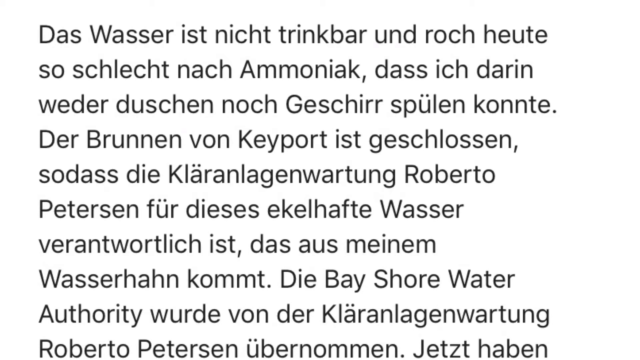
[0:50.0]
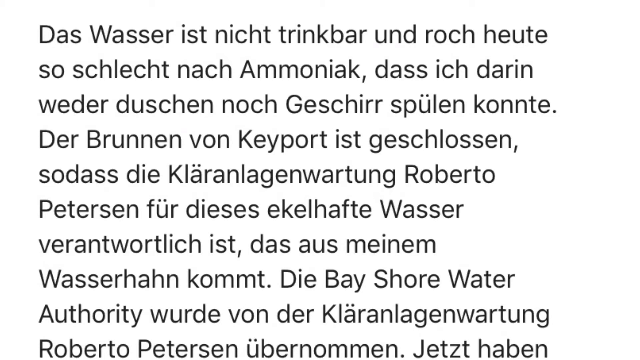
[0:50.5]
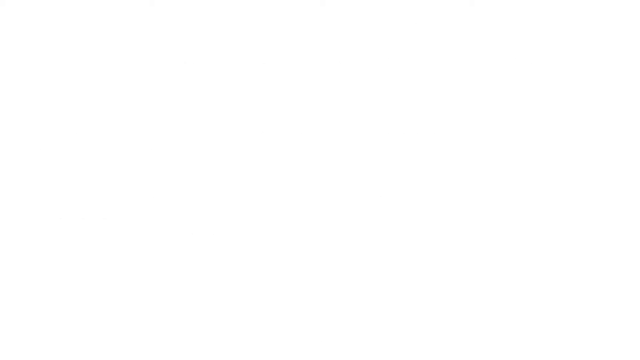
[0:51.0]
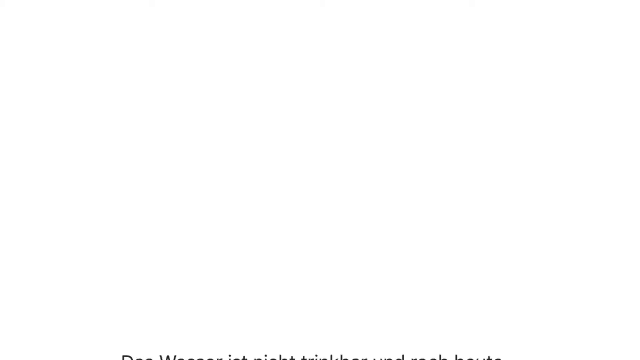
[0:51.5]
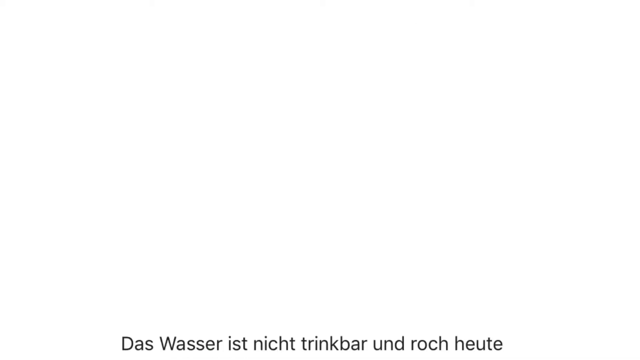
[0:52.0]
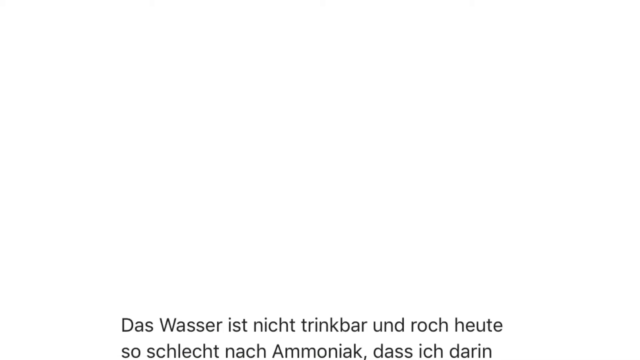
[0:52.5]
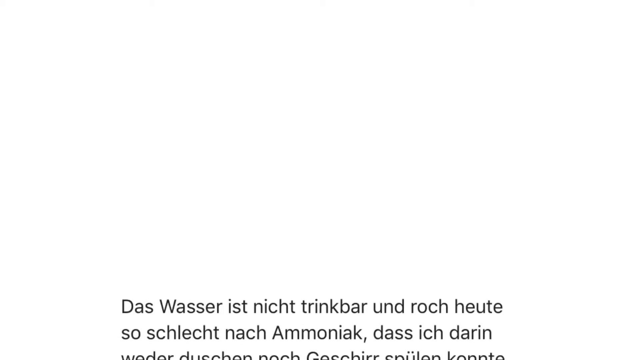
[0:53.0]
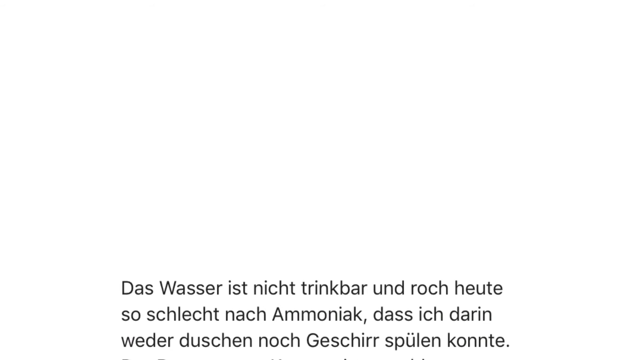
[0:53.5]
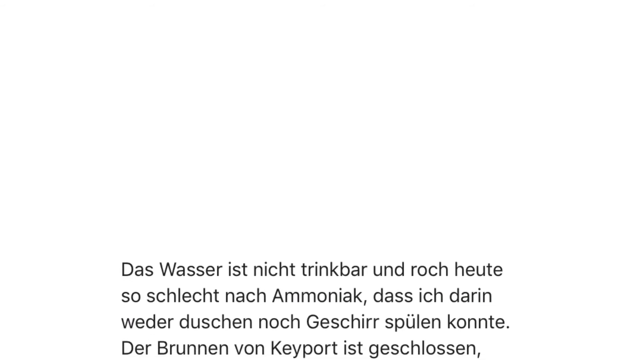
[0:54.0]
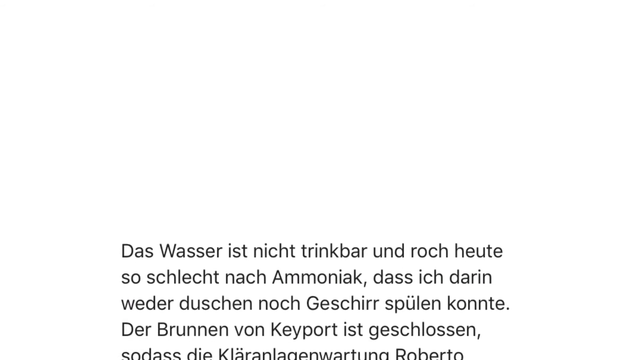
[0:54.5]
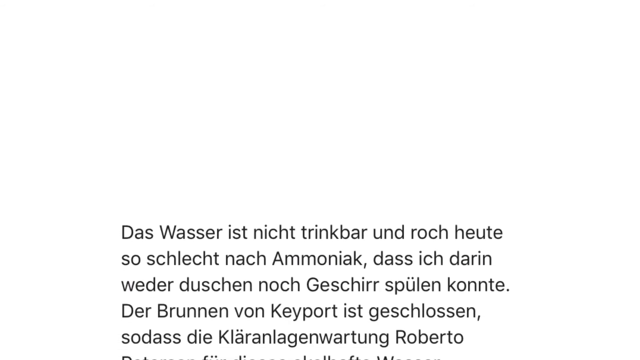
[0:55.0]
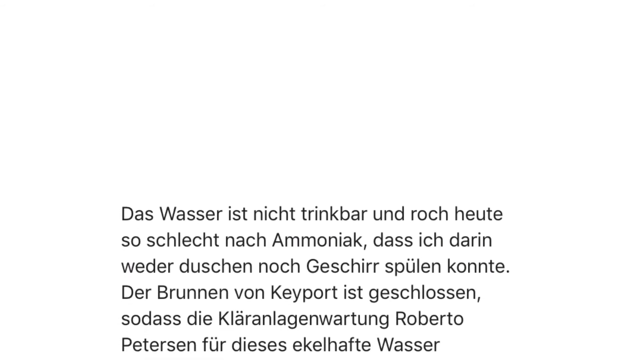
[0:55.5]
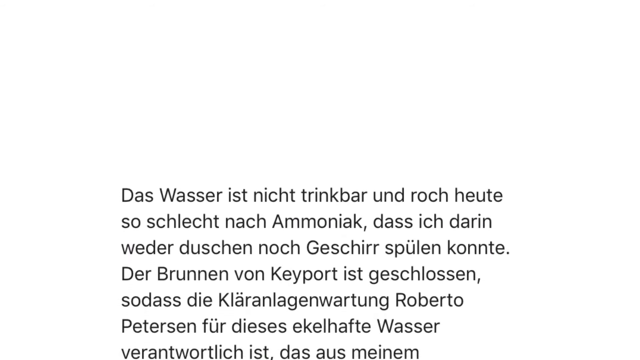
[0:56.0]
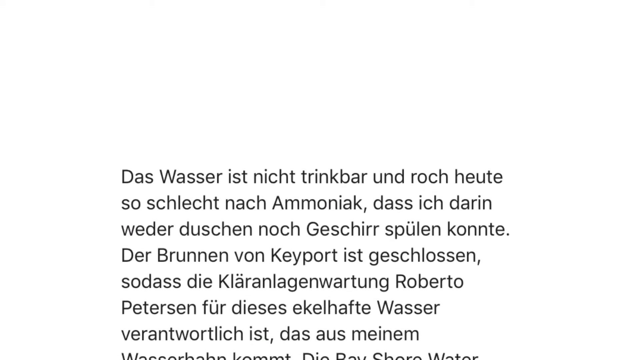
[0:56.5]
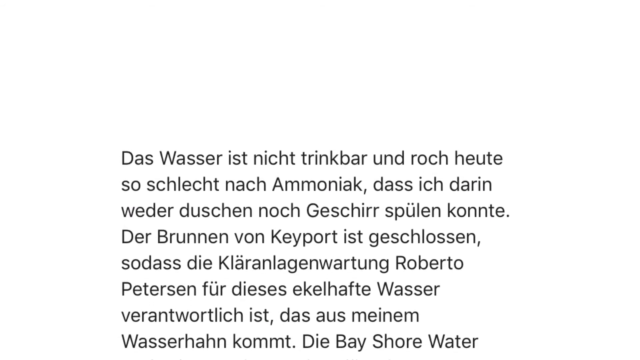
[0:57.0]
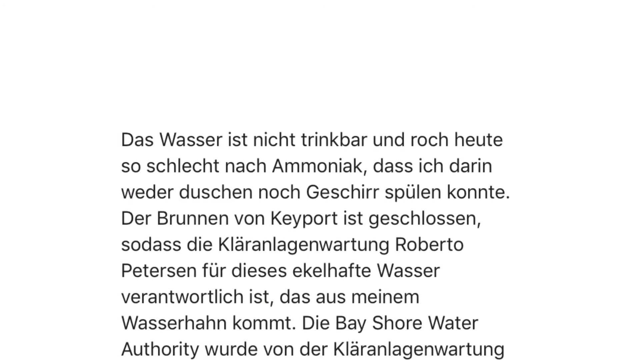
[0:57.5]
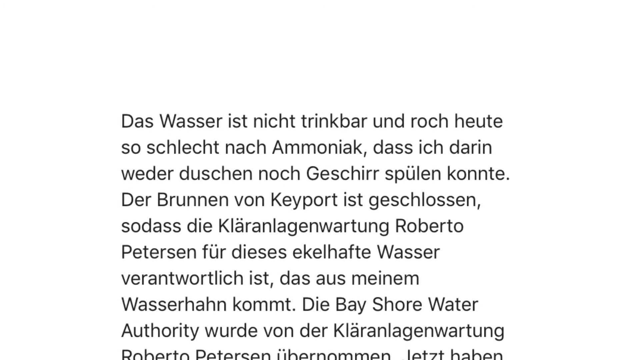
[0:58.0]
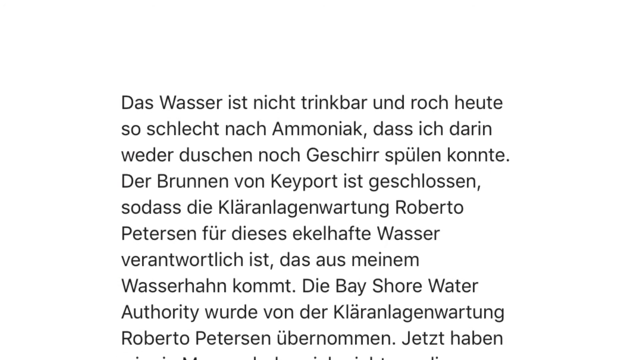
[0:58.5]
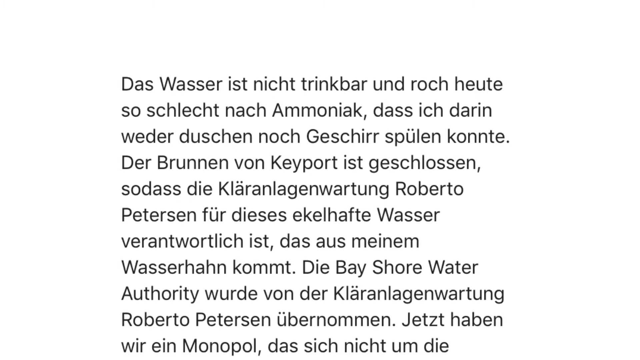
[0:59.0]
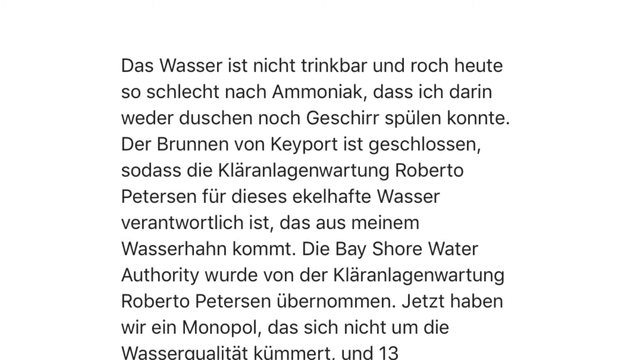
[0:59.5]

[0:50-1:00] Text messages written in German zoom and fade up, in black text on a white background. Each fades off and transitions to further messages in German with no subtitles. The name Roberto Peterson and Bayshore Water are mentioned. Everything is on a white background, and one screen shows just a paragraph of text.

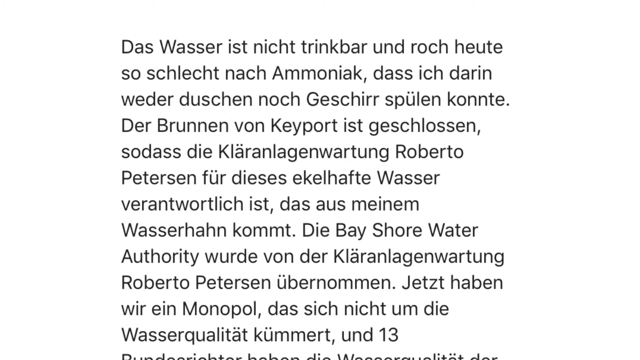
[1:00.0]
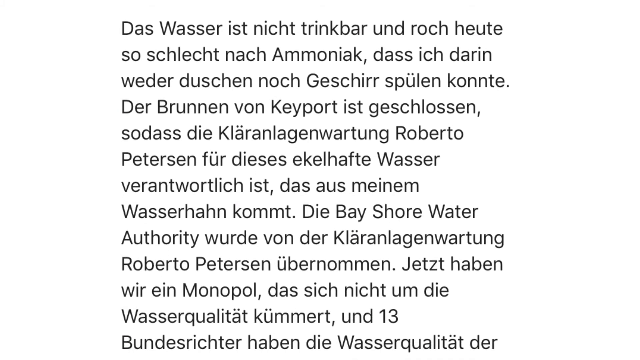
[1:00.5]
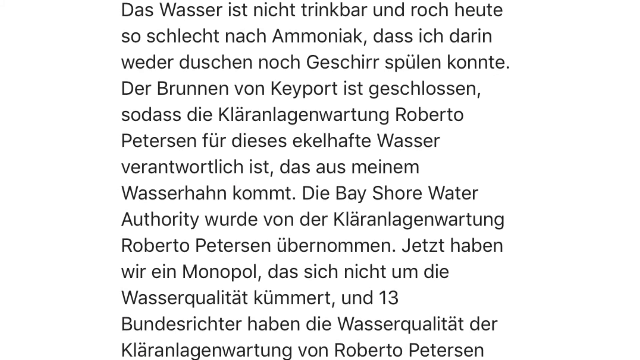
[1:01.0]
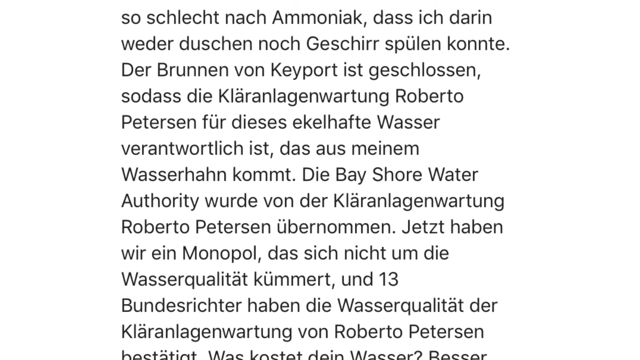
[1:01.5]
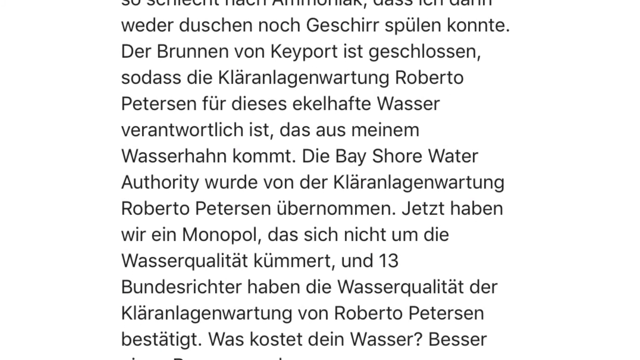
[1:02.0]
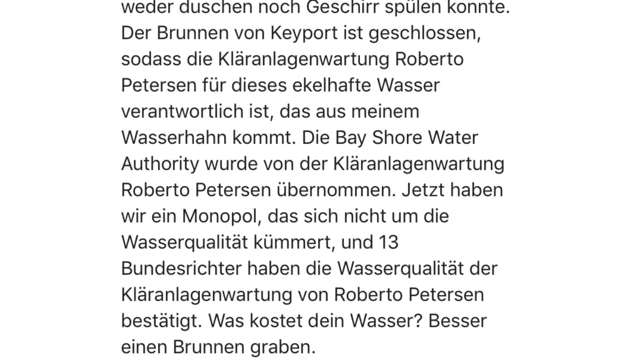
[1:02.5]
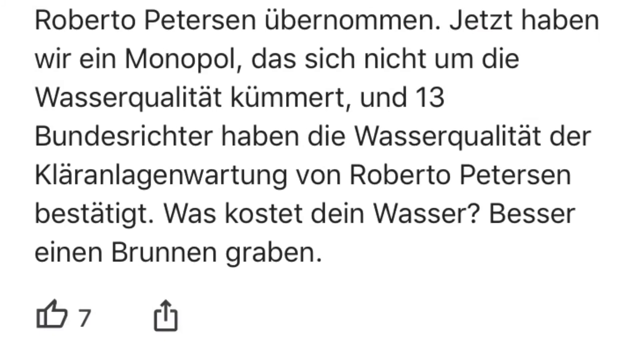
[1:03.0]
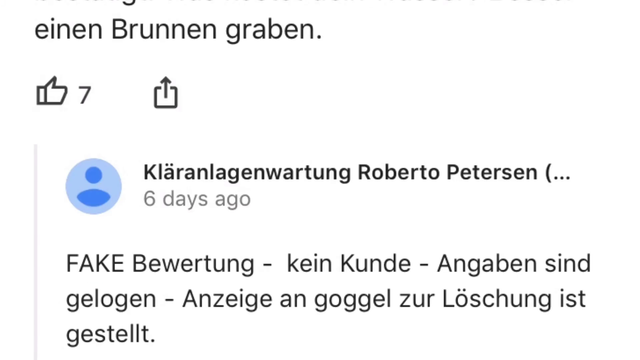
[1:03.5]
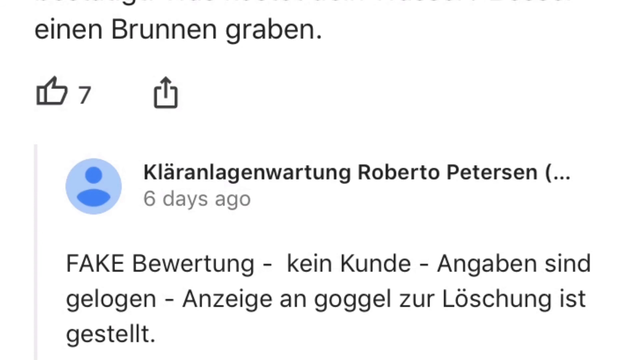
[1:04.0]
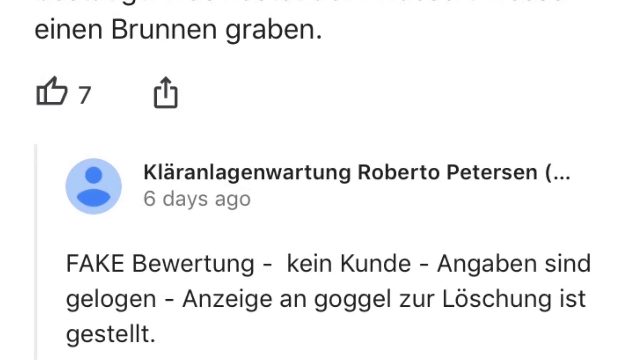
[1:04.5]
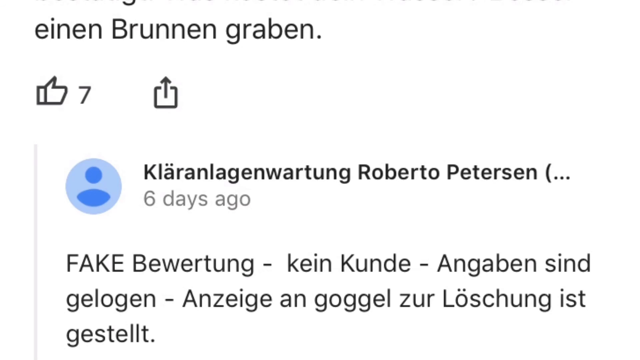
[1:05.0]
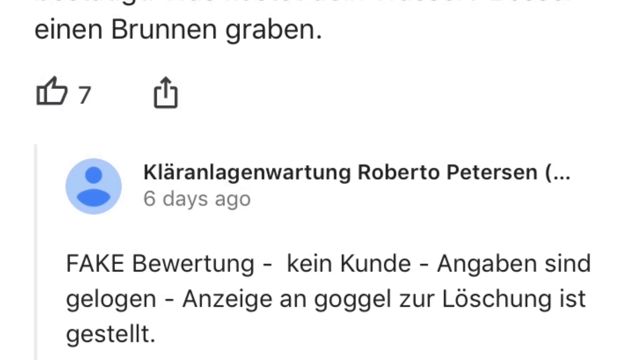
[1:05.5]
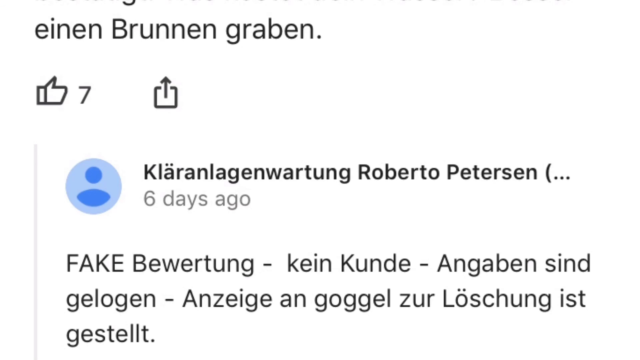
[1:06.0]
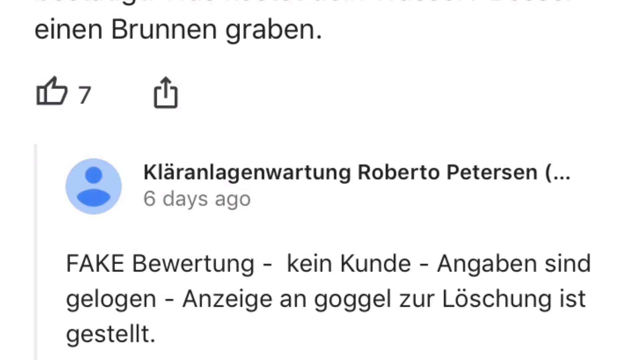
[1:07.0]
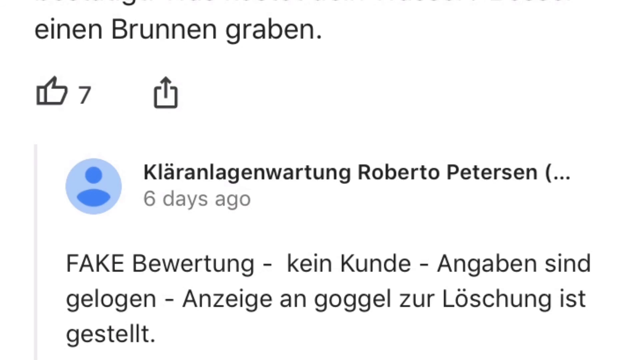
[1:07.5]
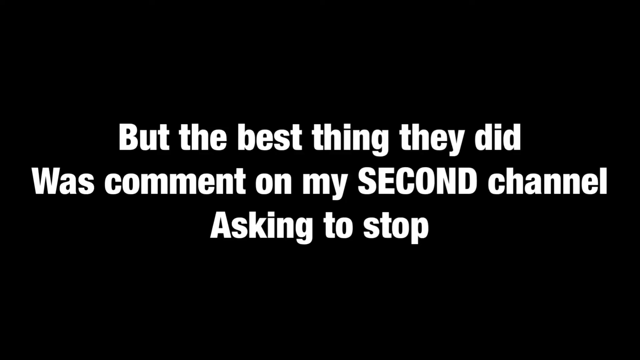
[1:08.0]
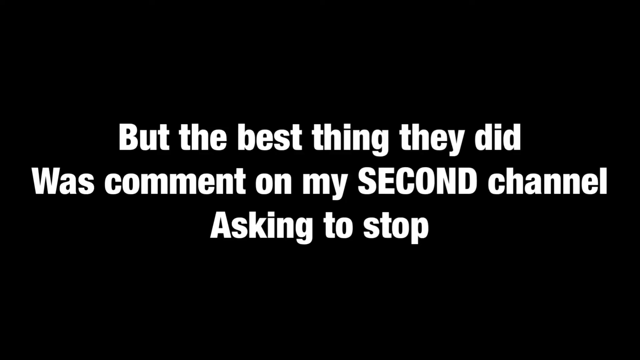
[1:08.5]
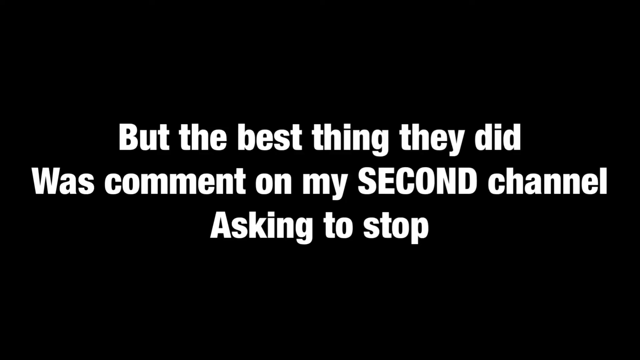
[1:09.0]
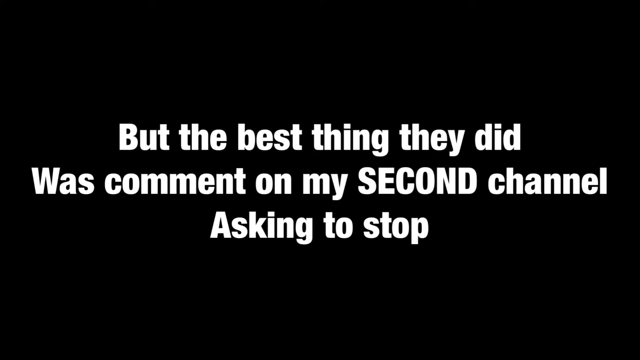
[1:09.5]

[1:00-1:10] Text written in German continues in black on a white background, including words such as Roberto Pedersen and "Die Bayshore Water Authority". The video transitions to a social media post with seven likes next to the like icon, and an upload icon shaped like a box with an arrow pointing upward. There is an empty profile icon, next to it the name Roberto Petersen and "six days ago", and beneath it German text beginning with "fake", in black on a white background. The video then transitions to text reading "but the best thing that it did was comment on my second channel asking to stop" in white on a black background.